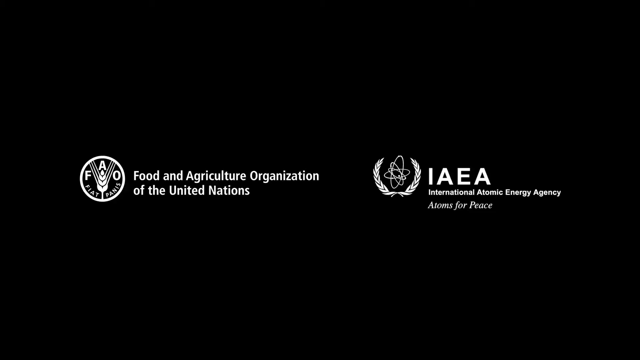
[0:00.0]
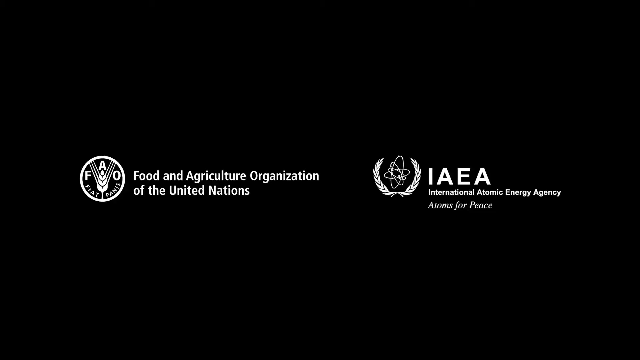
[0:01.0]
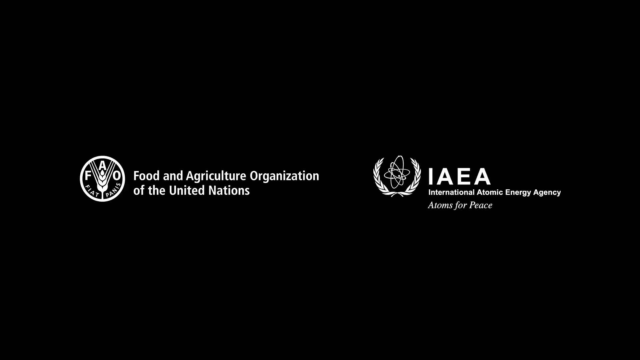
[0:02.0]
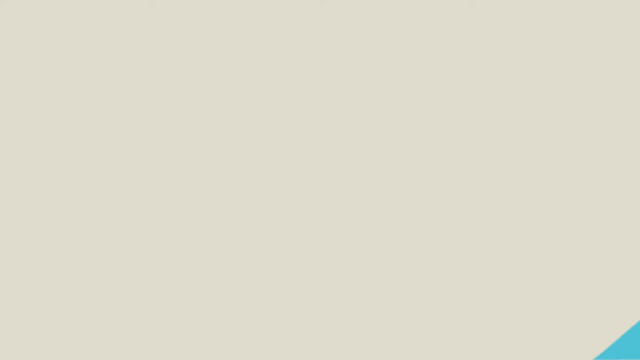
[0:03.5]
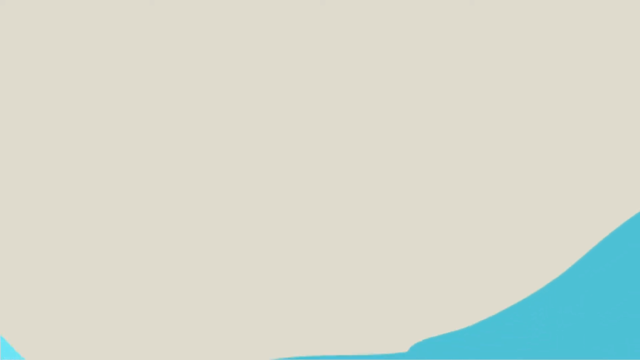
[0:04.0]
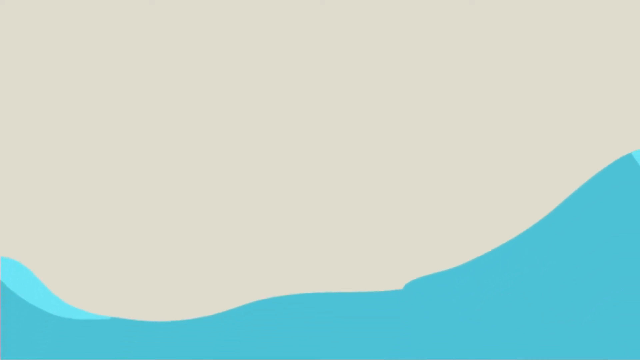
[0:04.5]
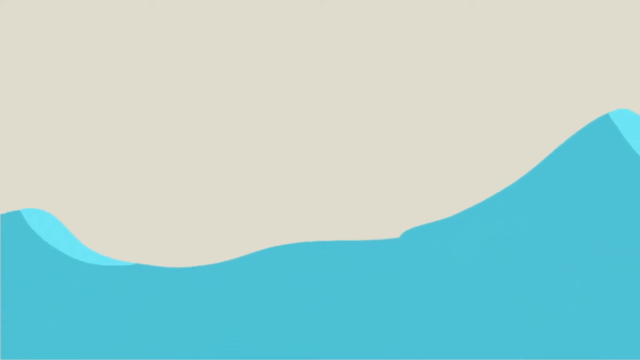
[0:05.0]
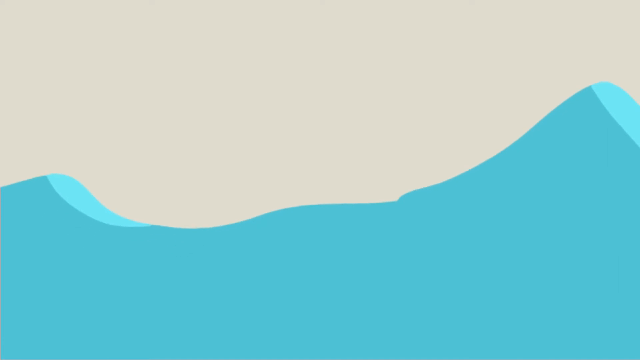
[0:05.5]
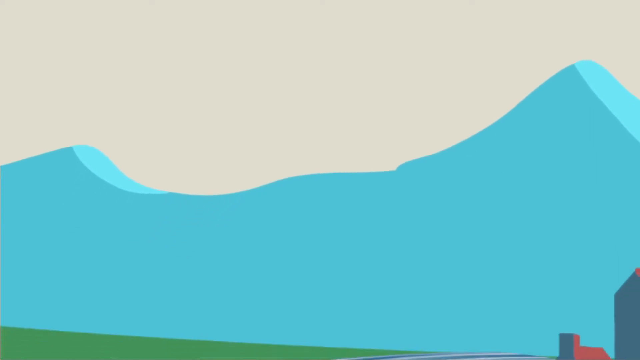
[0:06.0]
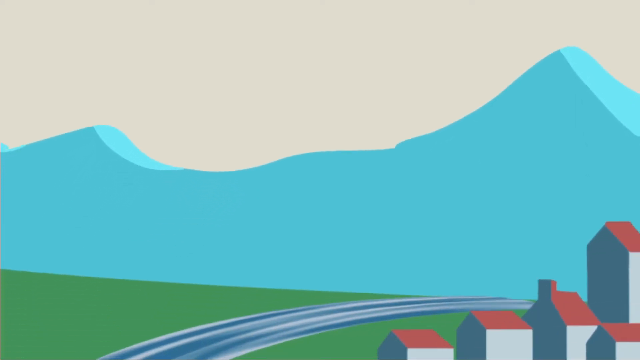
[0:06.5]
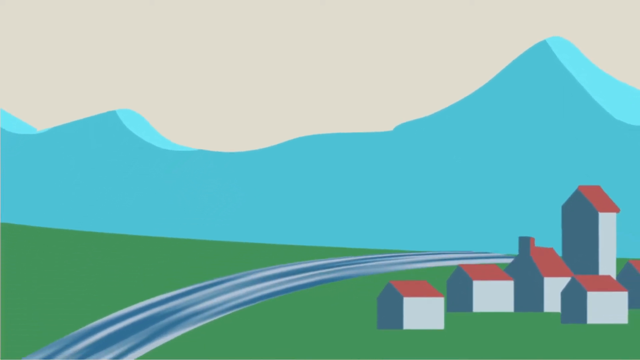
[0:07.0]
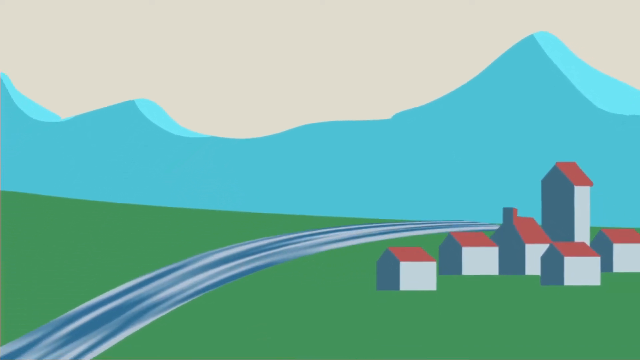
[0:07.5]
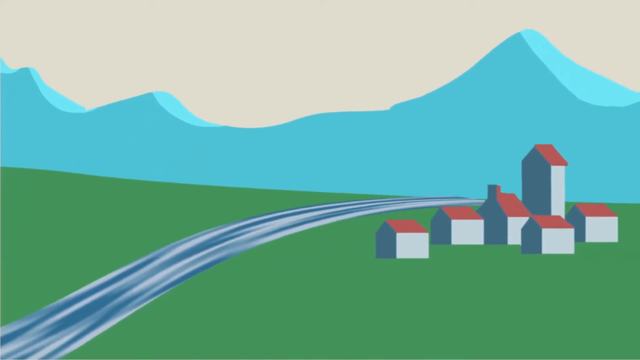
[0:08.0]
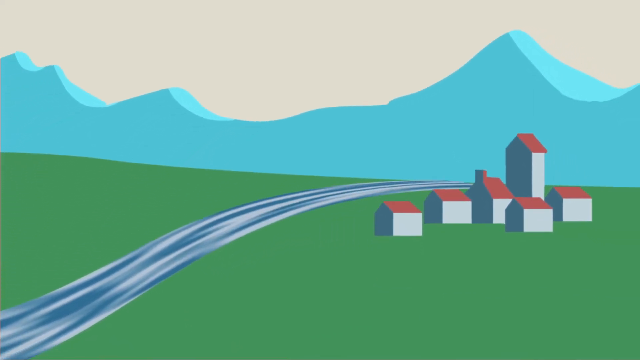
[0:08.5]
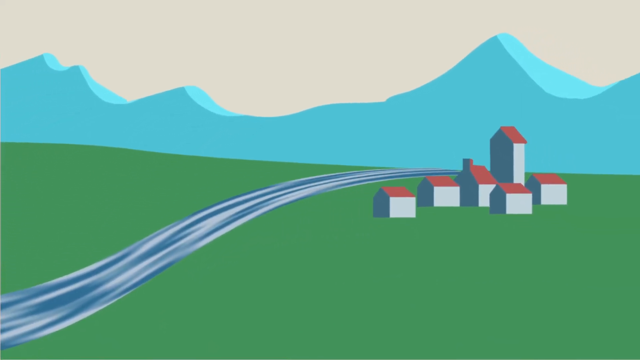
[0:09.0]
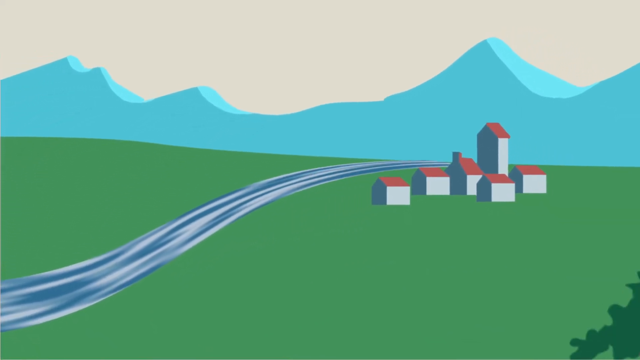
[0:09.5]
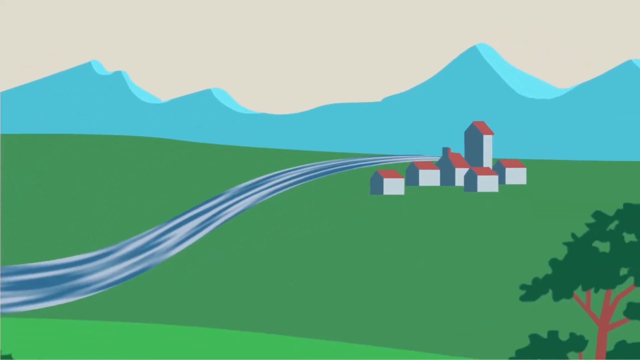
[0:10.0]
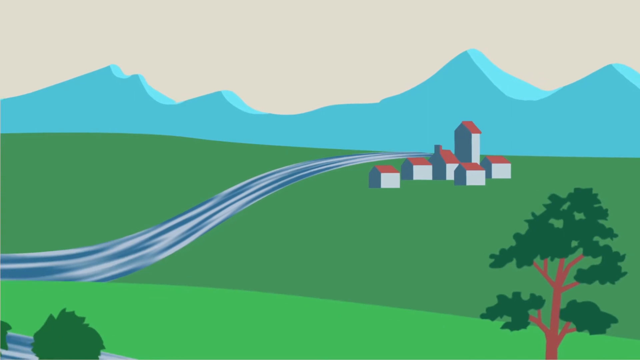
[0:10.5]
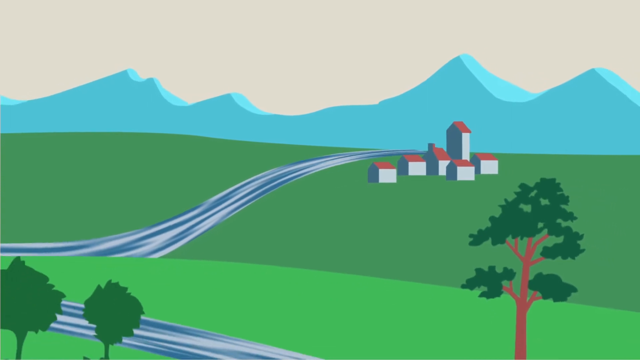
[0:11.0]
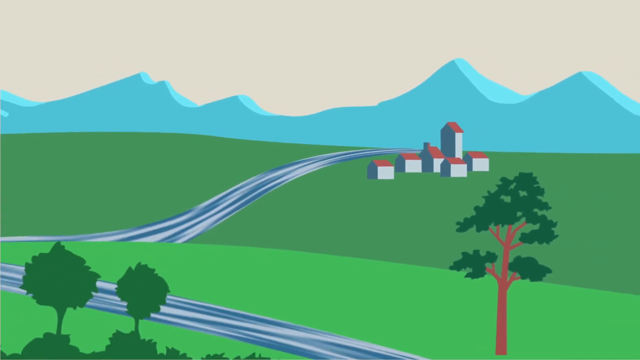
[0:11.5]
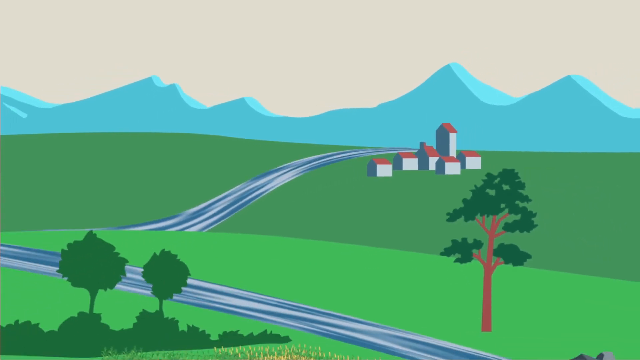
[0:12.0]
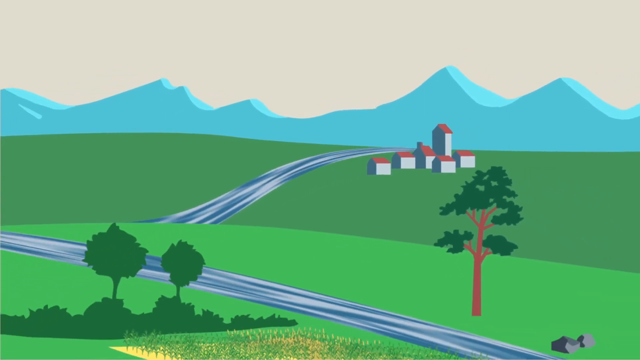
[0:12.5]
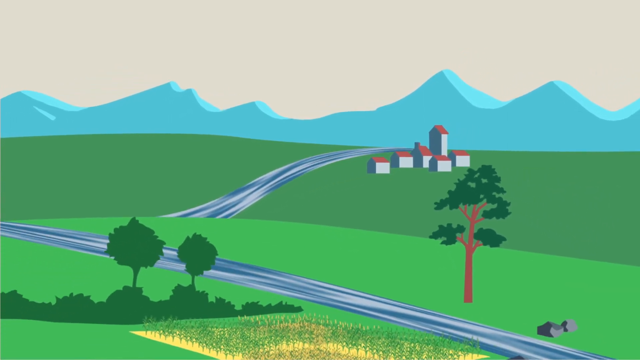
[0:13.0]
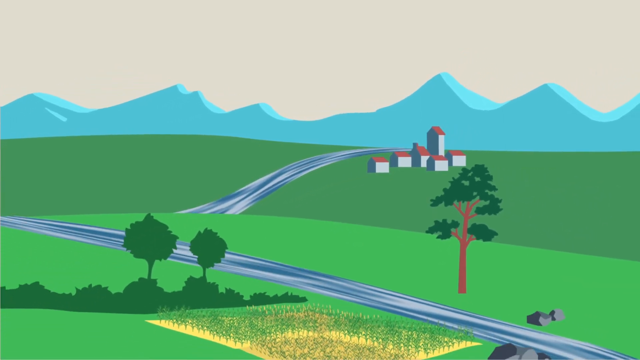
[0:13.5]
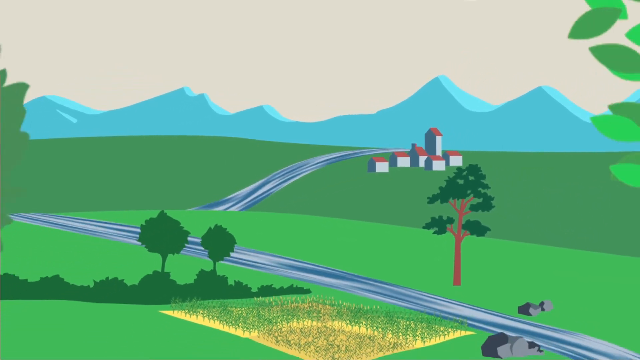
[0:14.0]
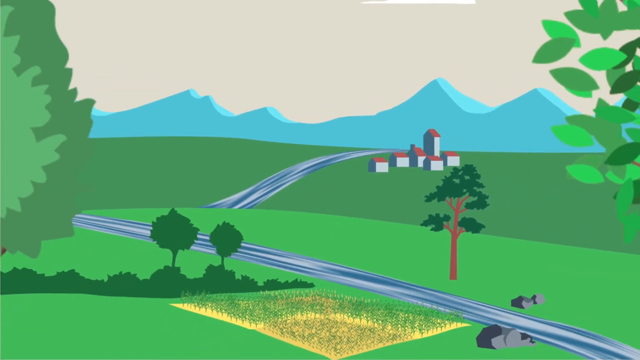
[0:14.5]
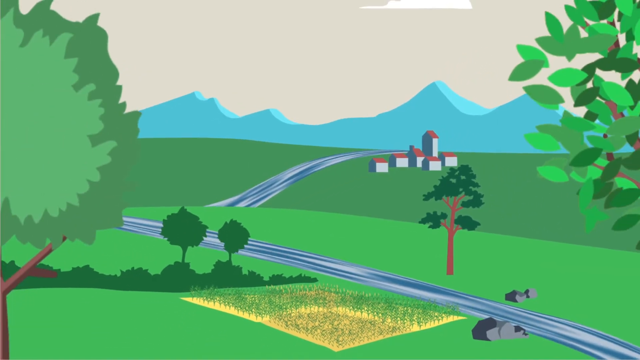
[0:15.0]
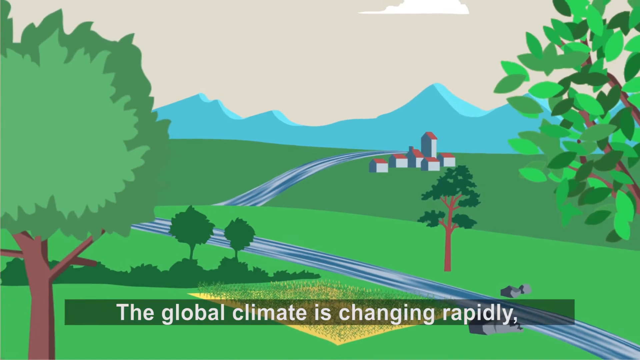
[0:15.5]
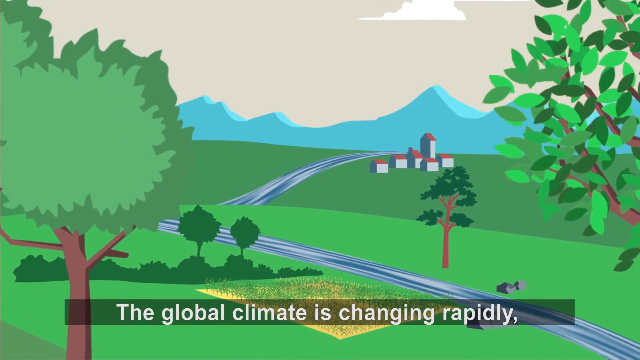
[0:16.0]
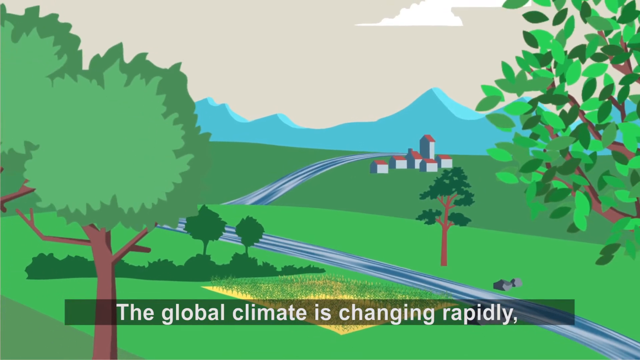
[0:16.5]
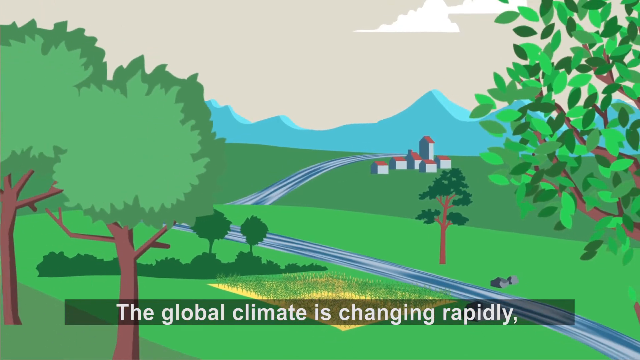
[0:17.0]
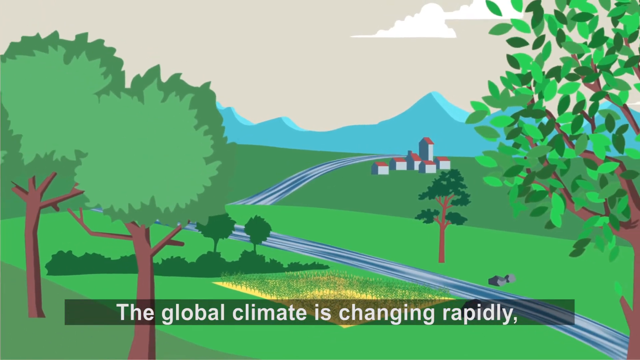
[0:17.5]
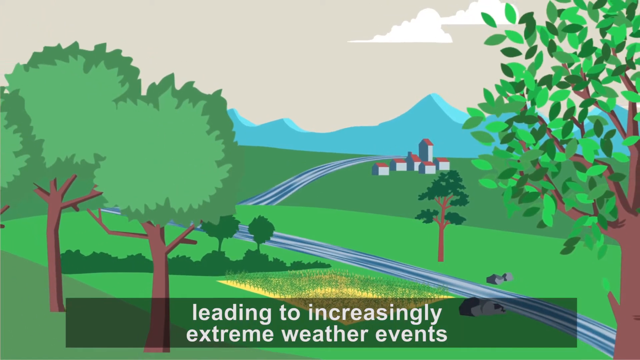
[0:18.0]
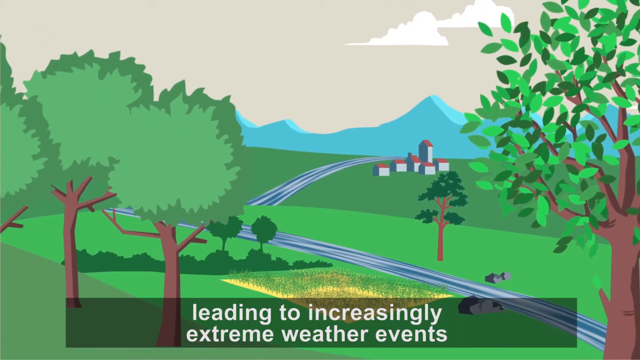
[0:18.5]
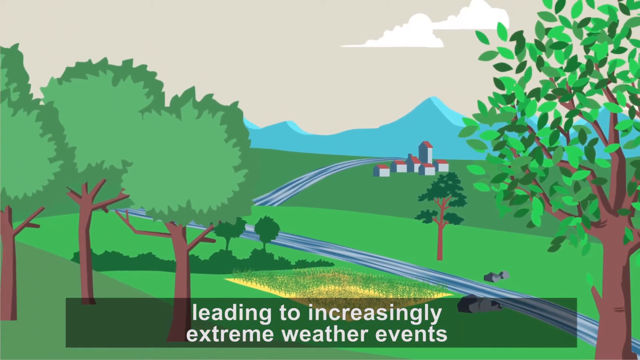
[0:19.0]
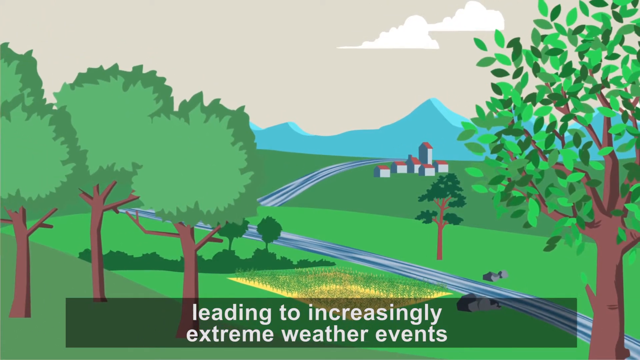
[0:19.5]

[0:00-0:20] White words appear on a solid black background. On the left is a white circle with "FAO" on it, and next to it the text "Food and Agricultural Organization" with "United Nations" underneath. In the space on the right, in all capital letters, is "IAEA", with "Adams for Peace" underneath. This stays up for a few seconds, then a white screen appears, followed by light blue mountains and a few houses with red roofs, along with a water stream, green grassland, trees, farmland and rocks. Text reads "The global climate is changing rapidly leading to increasingly extreme weather events."